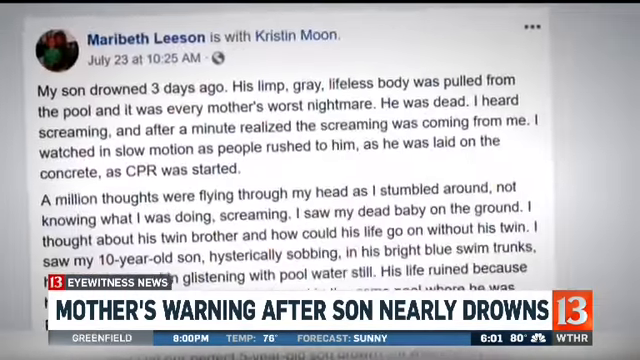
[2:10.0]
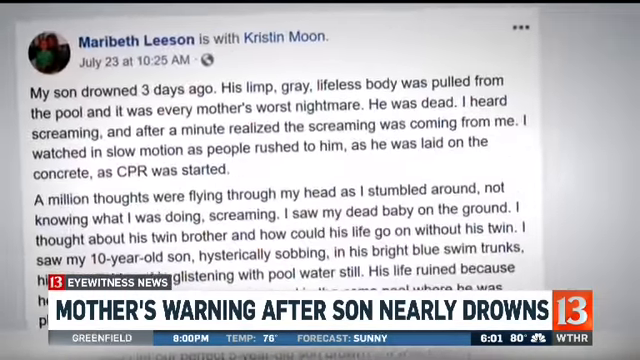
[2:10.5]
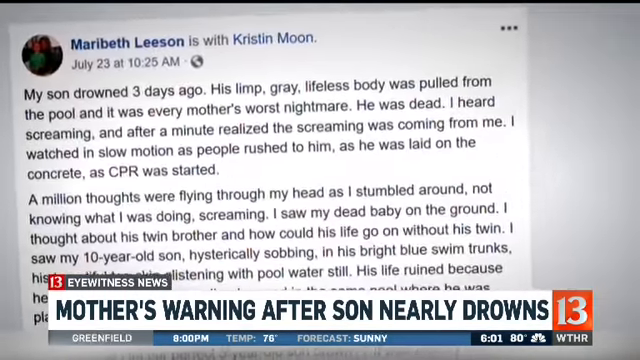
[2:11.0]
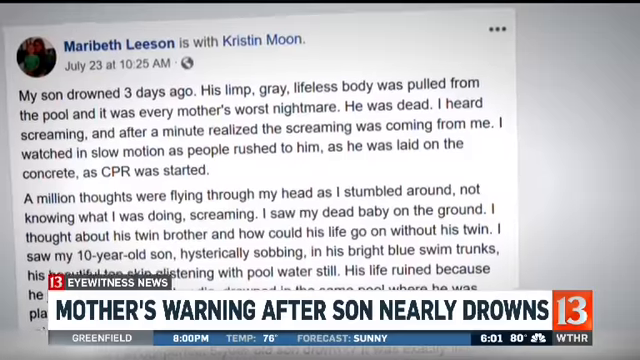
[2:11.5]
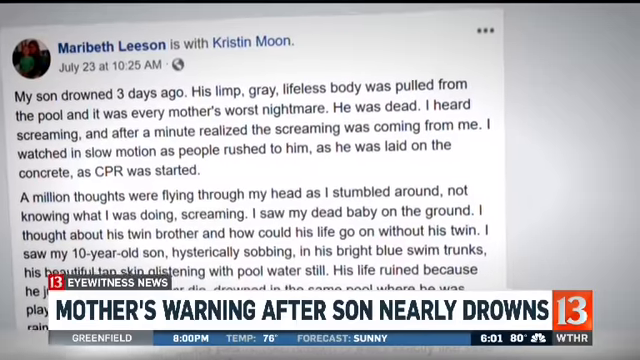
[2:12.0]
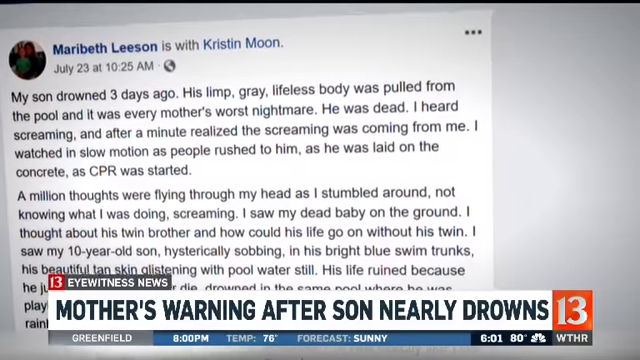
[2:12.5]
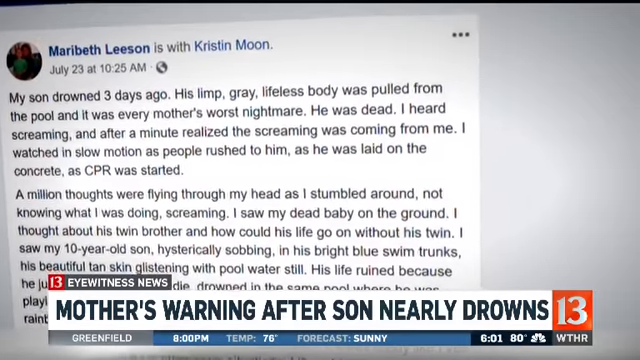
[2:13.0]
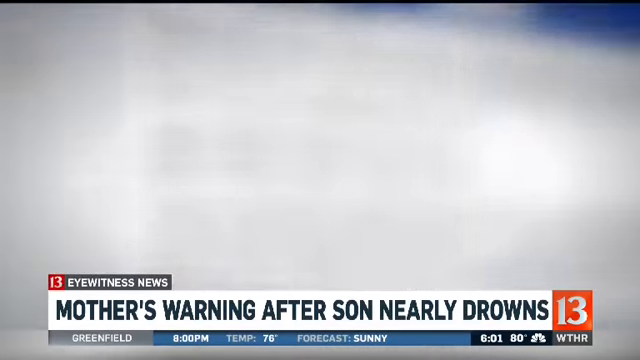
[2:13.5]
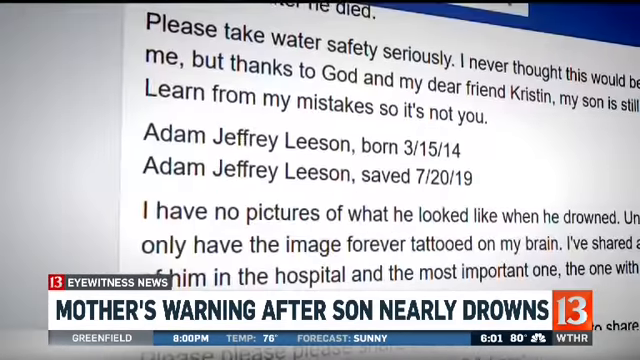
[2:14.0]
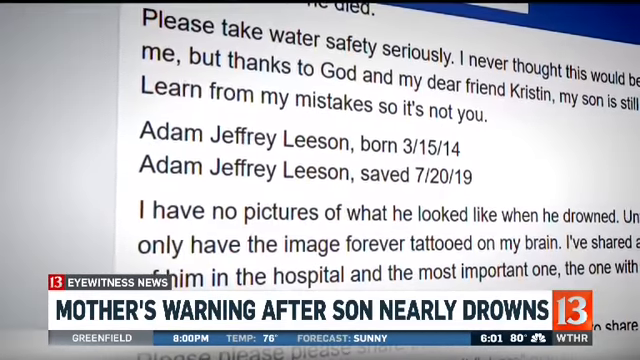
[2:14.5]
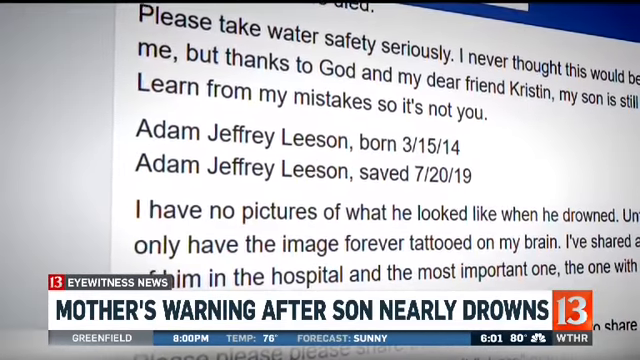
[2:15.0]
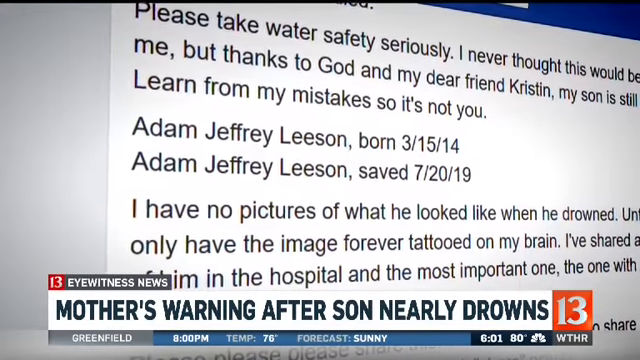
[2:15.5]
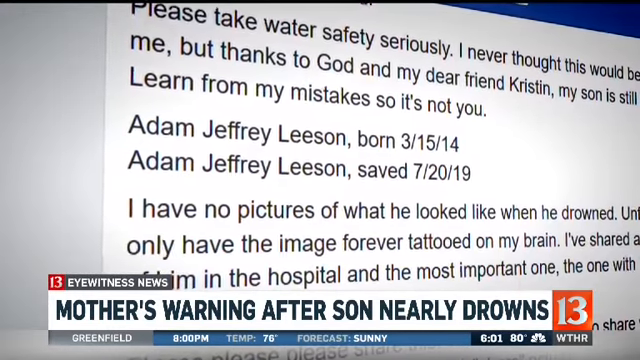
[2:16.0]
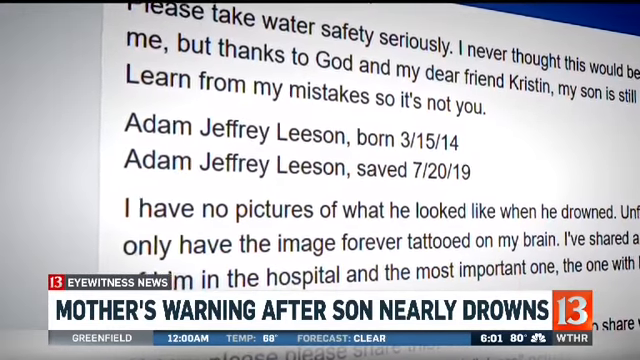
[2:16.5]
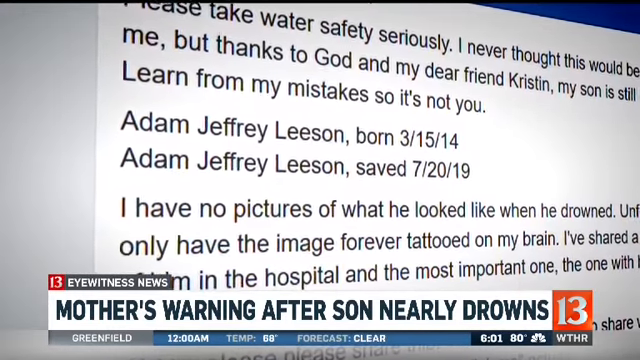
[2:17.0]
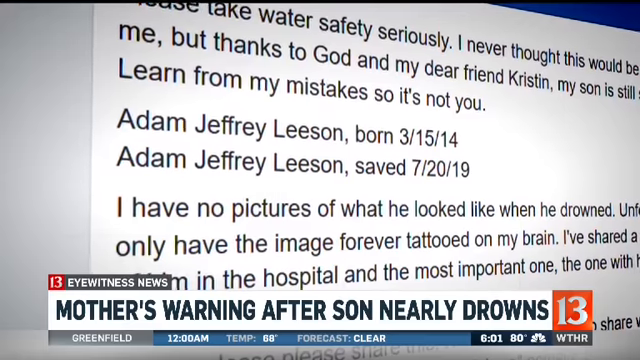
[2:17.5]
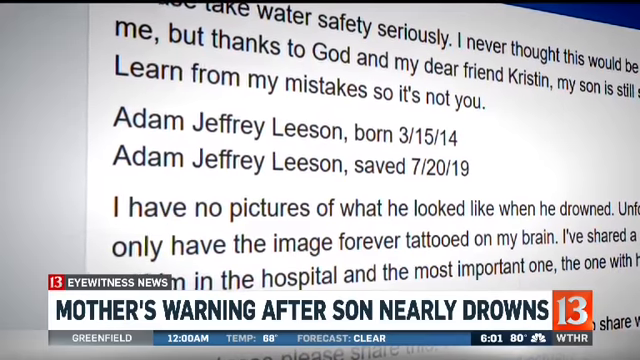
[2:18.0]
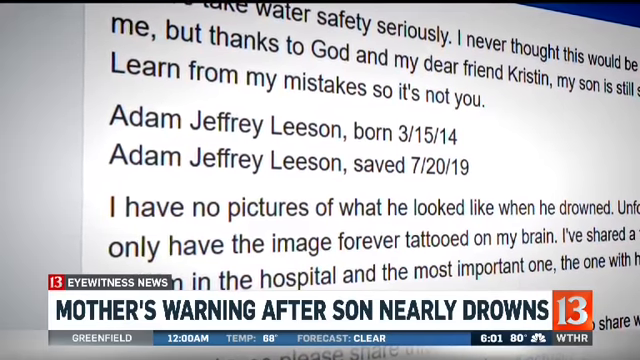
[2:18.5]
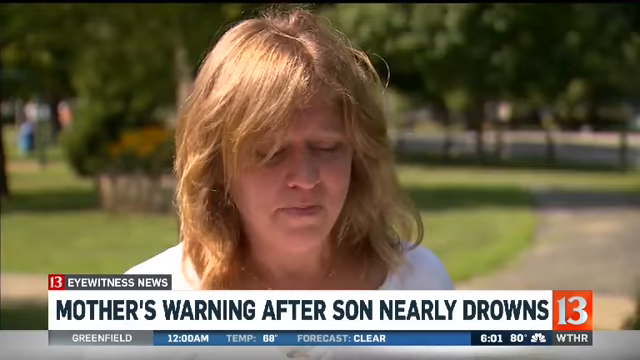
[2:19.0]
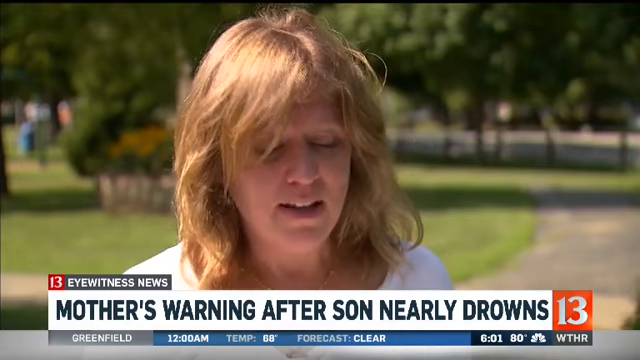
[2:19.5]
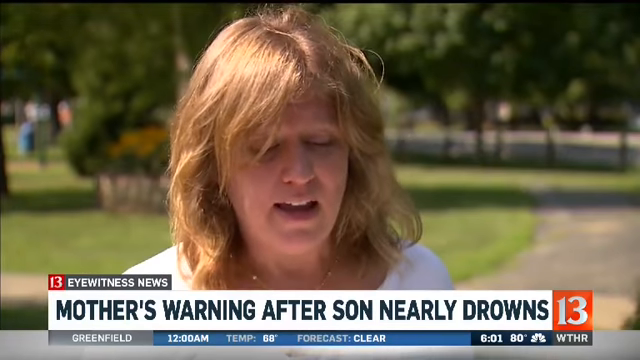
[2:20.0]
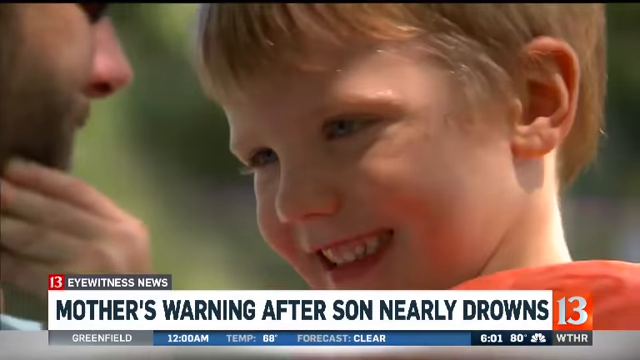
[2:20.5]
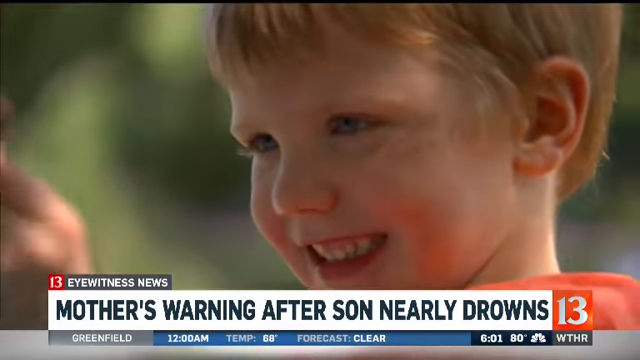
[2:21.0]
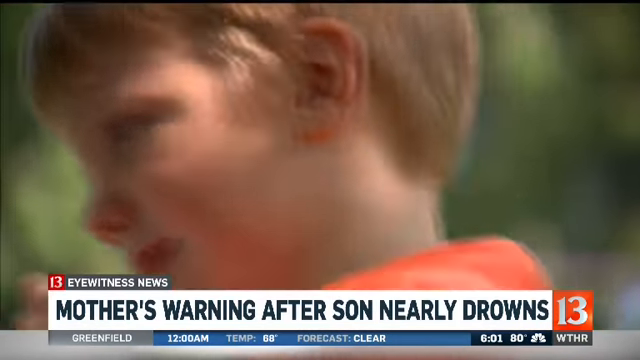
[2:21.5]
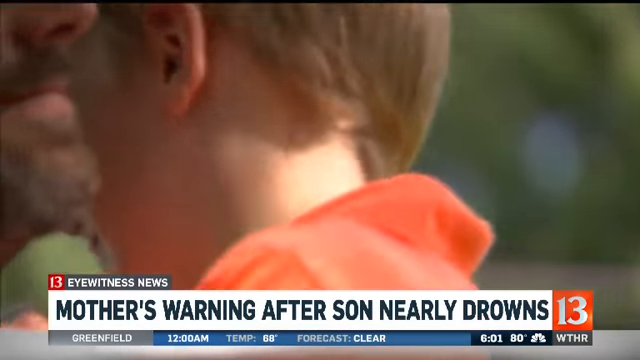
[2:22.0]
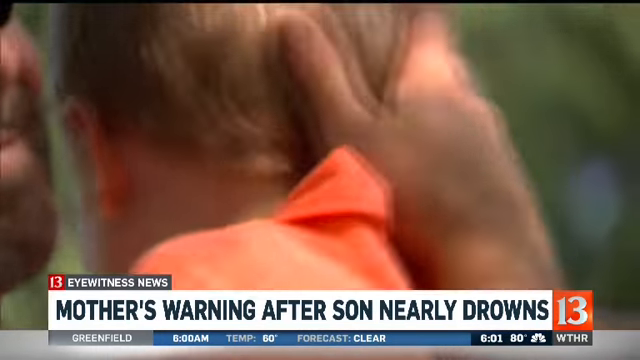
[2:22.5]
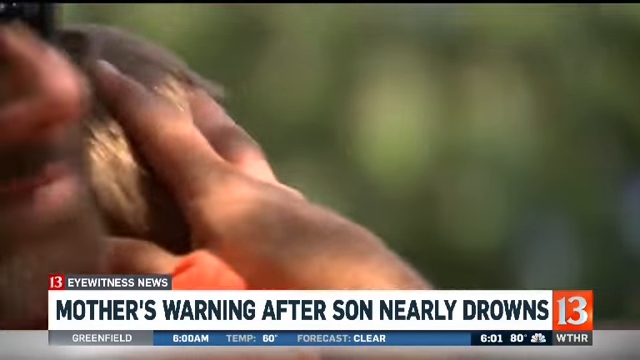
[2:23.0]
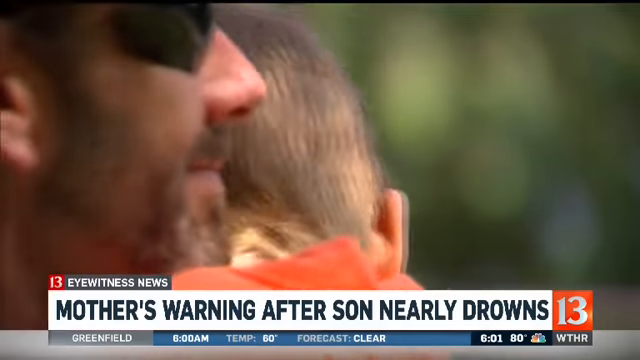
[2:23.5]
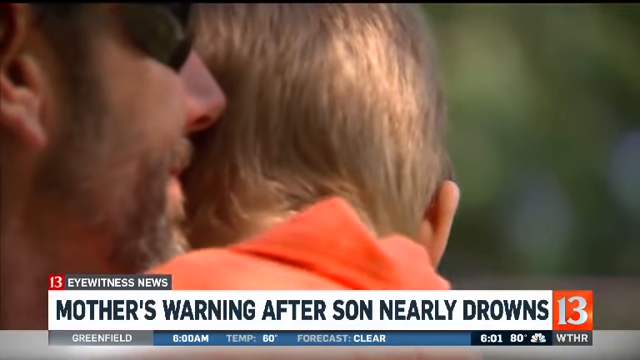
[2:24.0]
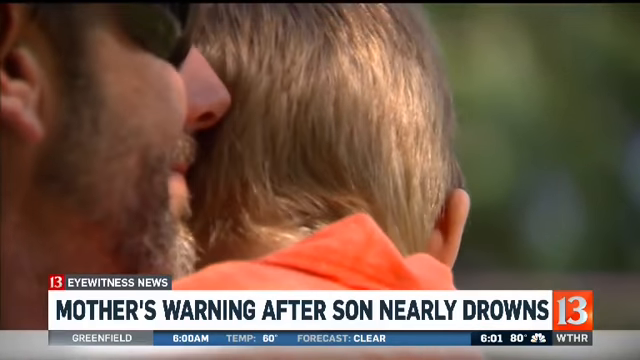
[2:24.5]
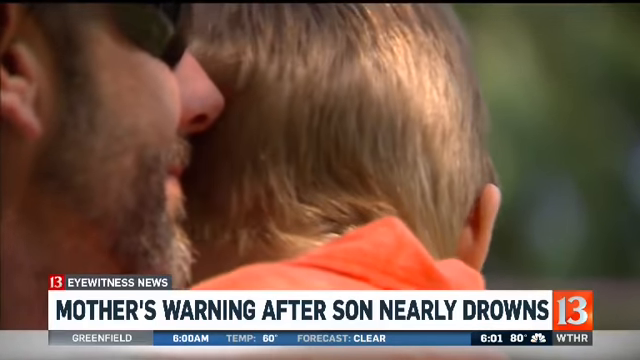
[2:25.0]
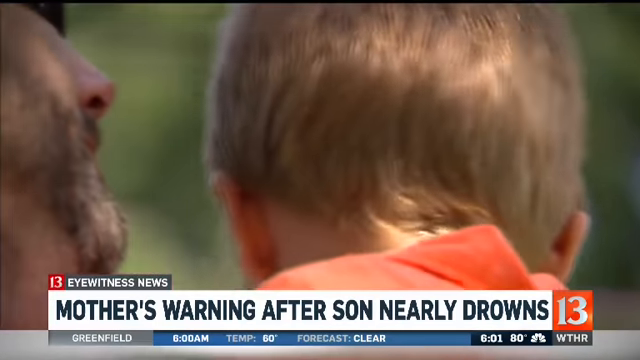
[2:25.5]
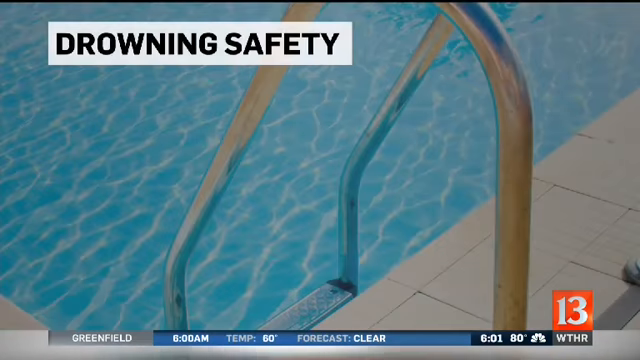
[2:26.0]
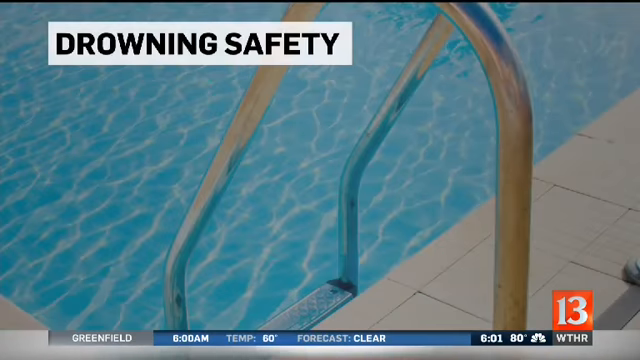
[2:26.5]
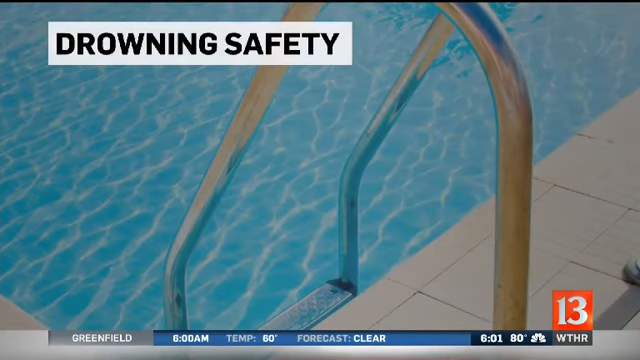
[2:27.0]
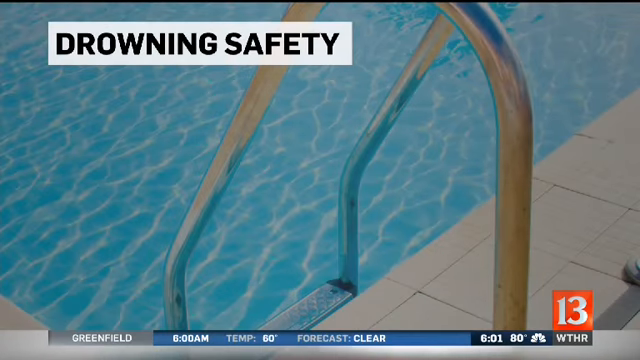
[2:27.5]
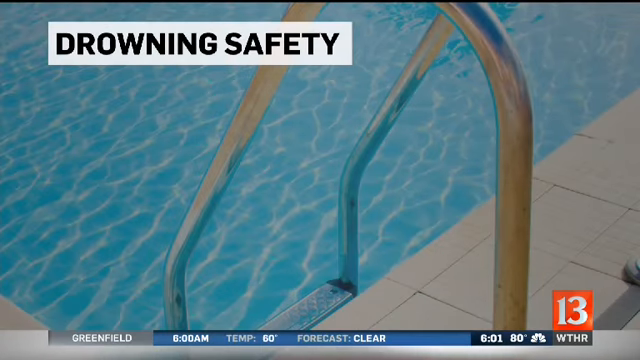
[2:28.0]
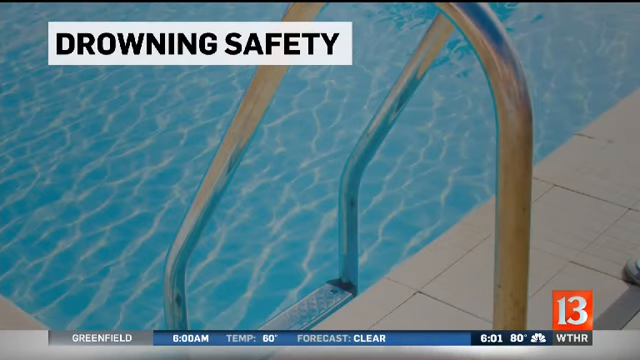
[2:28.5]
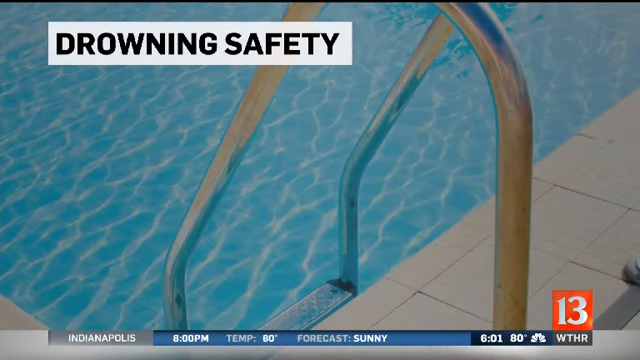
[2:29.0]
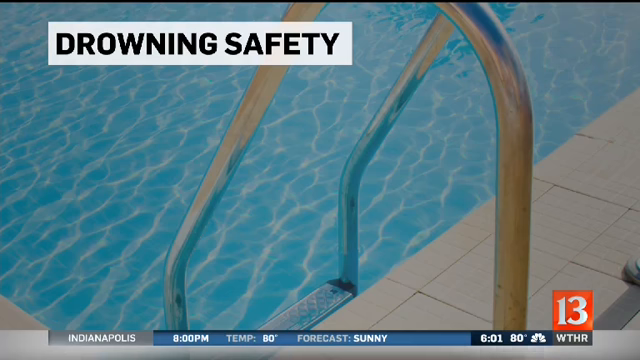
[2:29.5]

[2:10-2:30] With "channel 13" on screen, a Facebook post from the mom, Mary Beth Leeson (L-E-E-S-O-N), appears. It reads: "My son drowned three days ago. His limp gray lifeless body was pulled from the pool. ... every mother's worst nightmare. He was dead. I heard screaming after a minute realized the screaming was coming from me. I watched in slow motion as people rushed to him. And as he was laid on the concrete, as CPR was started, a million thoughts were flying through my head as I stumbled around, not knowing what I'm doing, screaming. I saw my dead baby in the ground. I thought about his twin brother and how could his life go on without his twin. I saw my 10 year old son hysterically sobbing in his bright blue swim trunks." The post thanks her friend Kristen for saving her son's life.